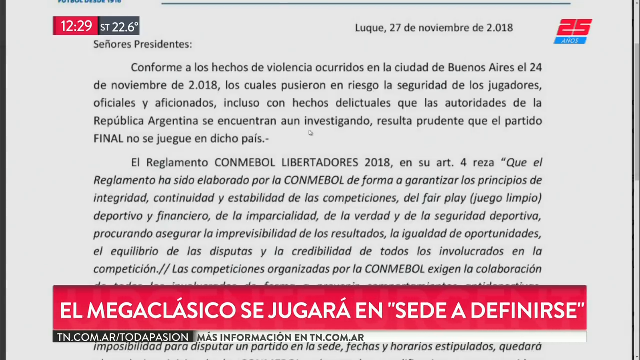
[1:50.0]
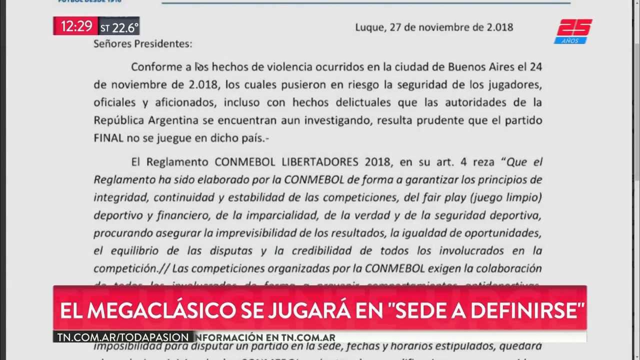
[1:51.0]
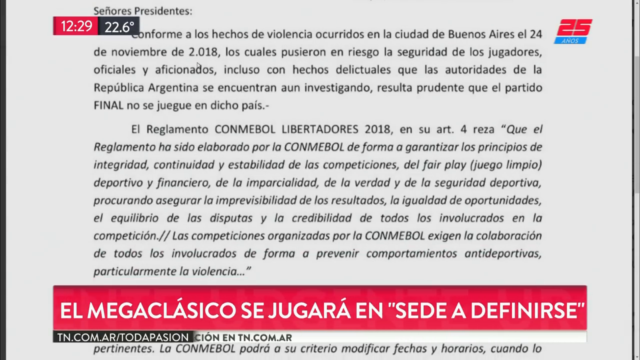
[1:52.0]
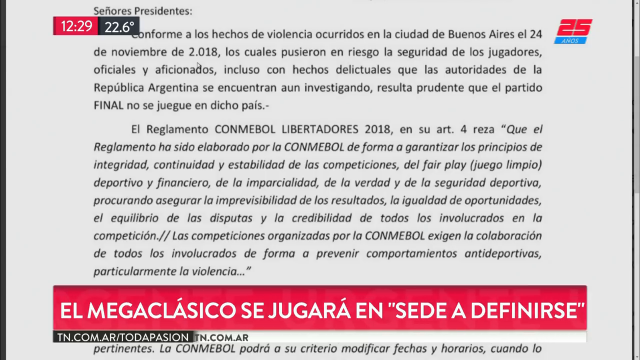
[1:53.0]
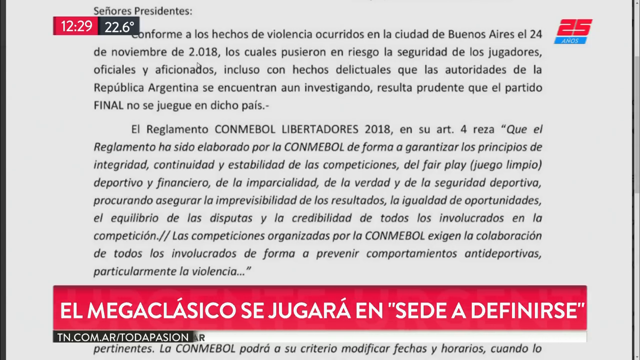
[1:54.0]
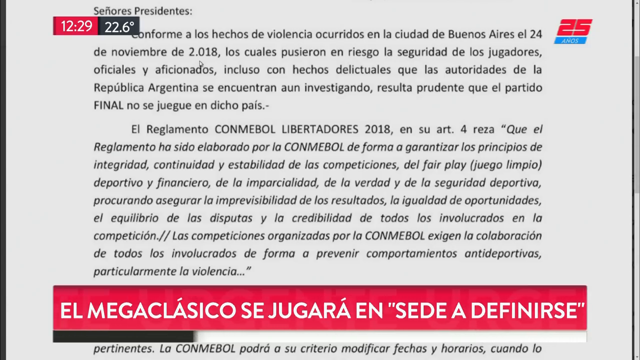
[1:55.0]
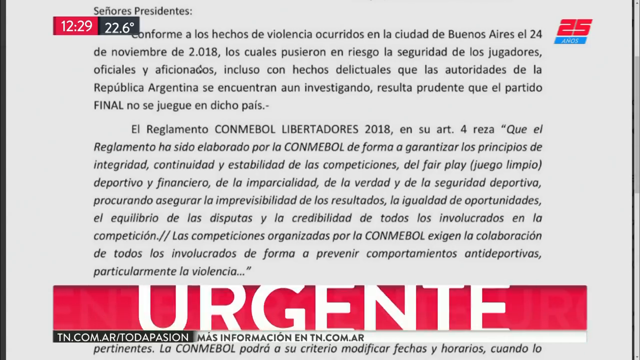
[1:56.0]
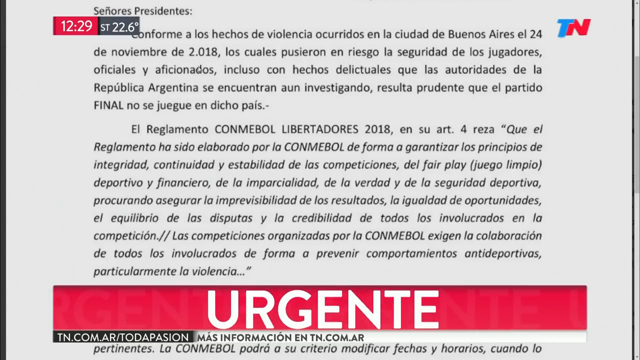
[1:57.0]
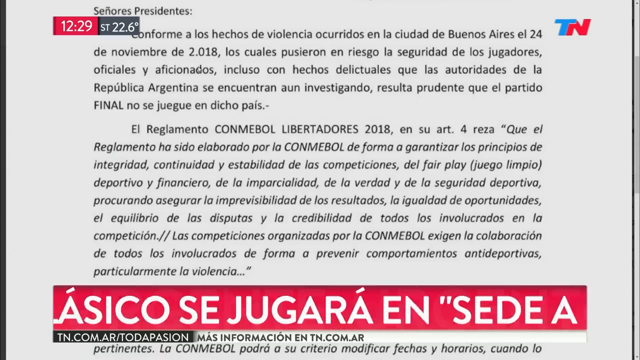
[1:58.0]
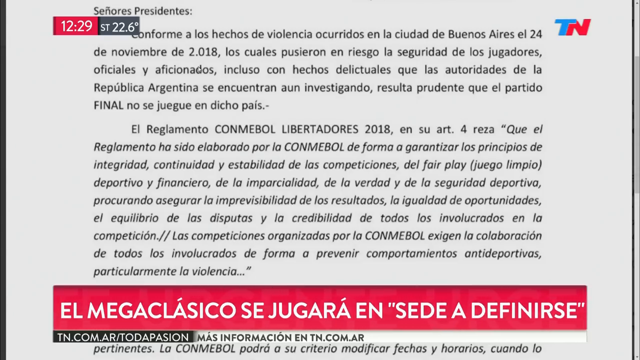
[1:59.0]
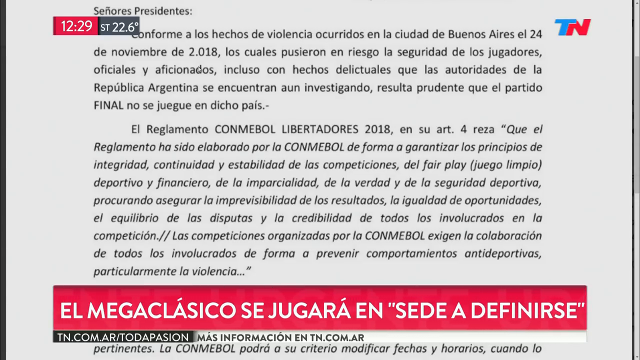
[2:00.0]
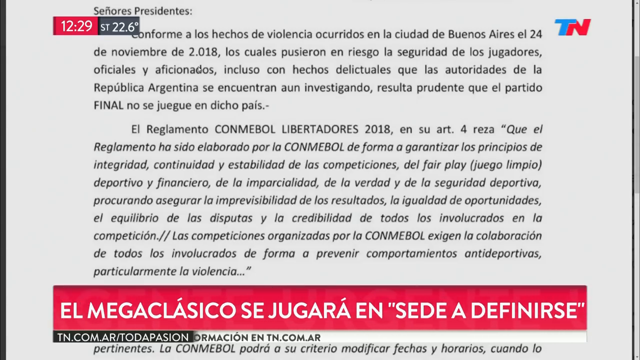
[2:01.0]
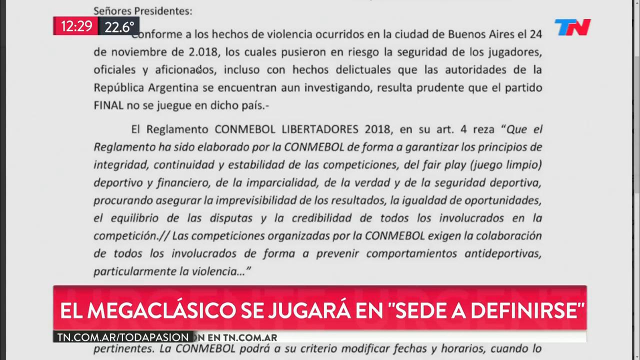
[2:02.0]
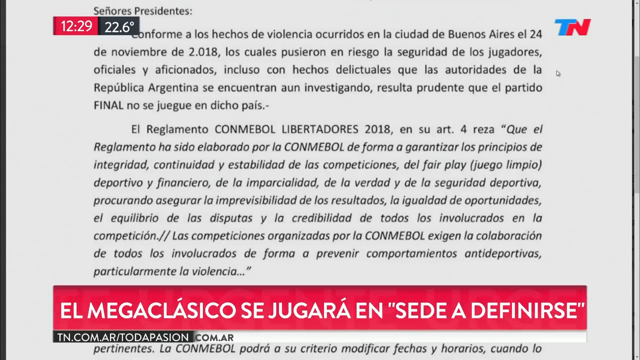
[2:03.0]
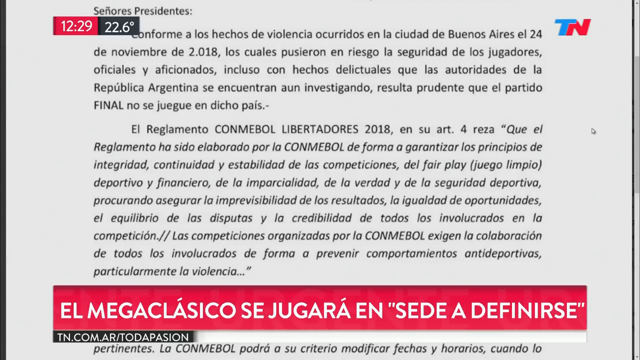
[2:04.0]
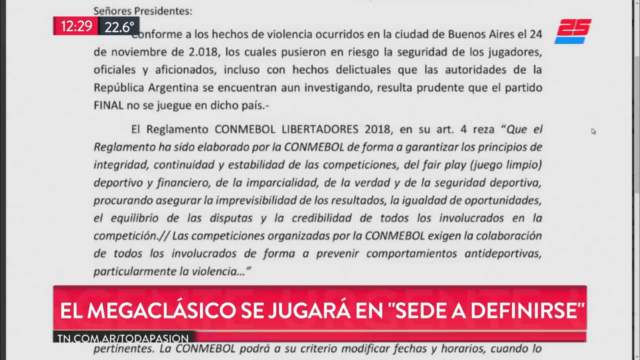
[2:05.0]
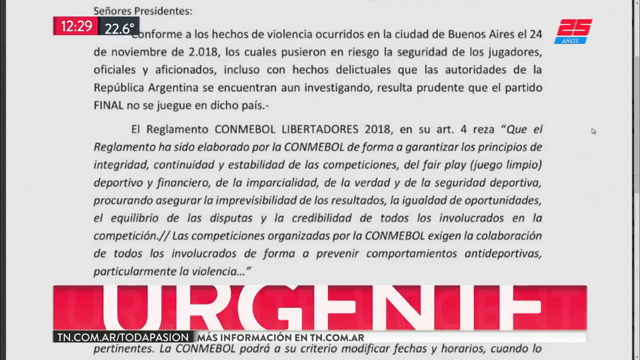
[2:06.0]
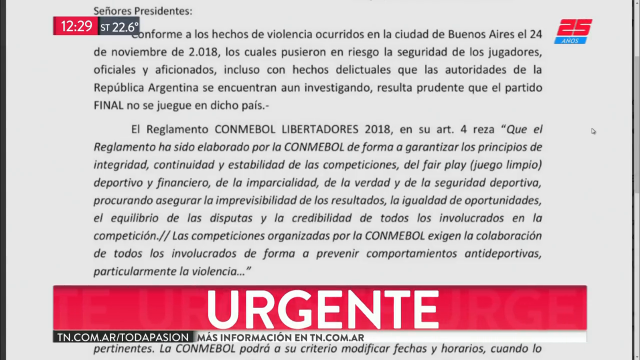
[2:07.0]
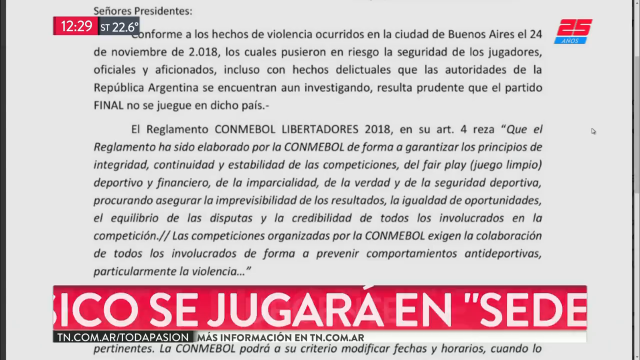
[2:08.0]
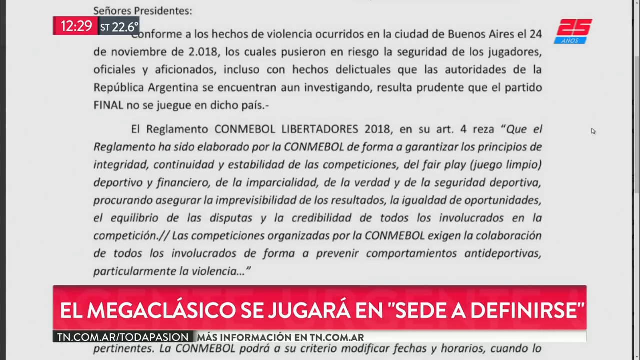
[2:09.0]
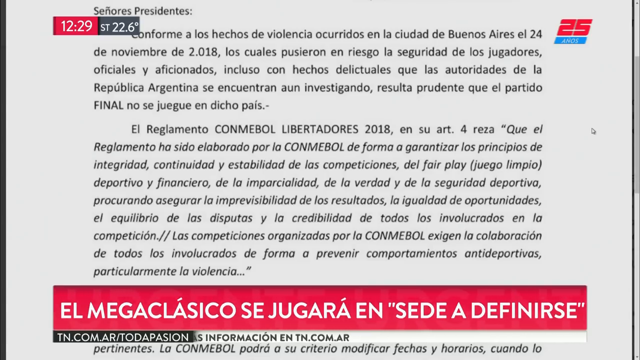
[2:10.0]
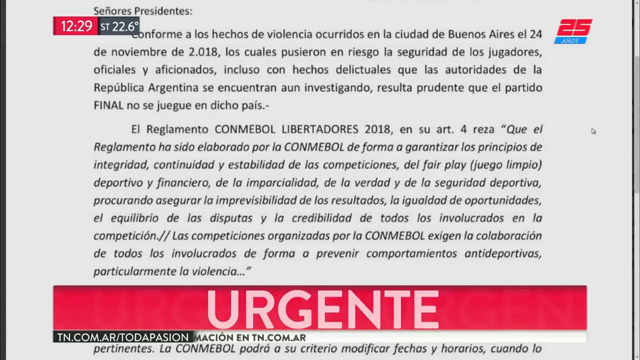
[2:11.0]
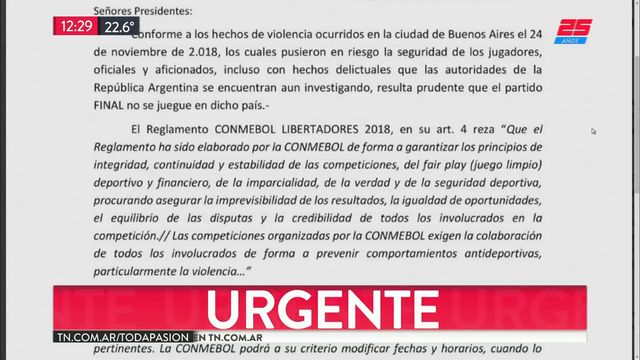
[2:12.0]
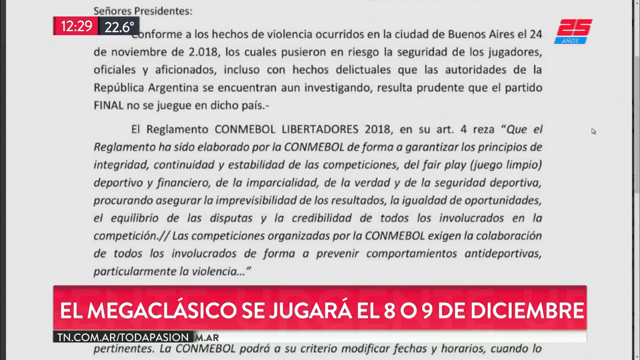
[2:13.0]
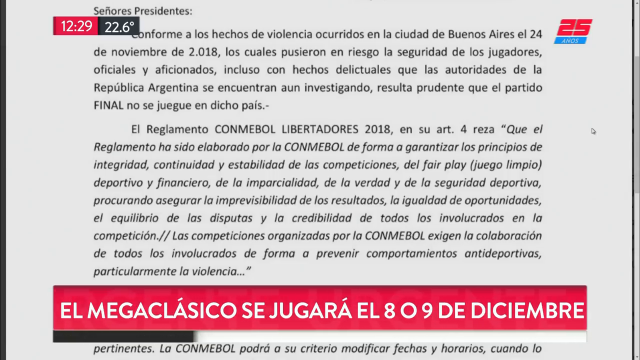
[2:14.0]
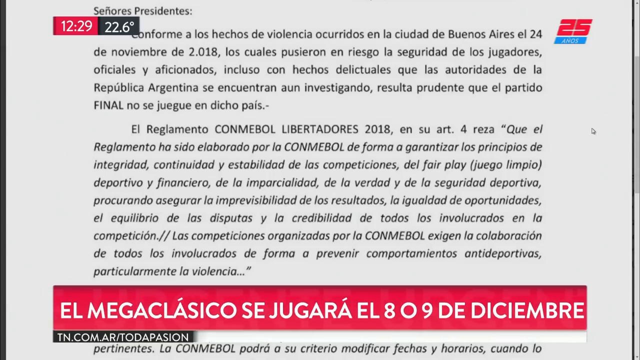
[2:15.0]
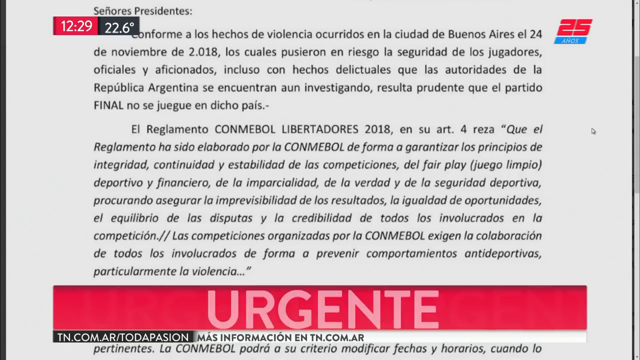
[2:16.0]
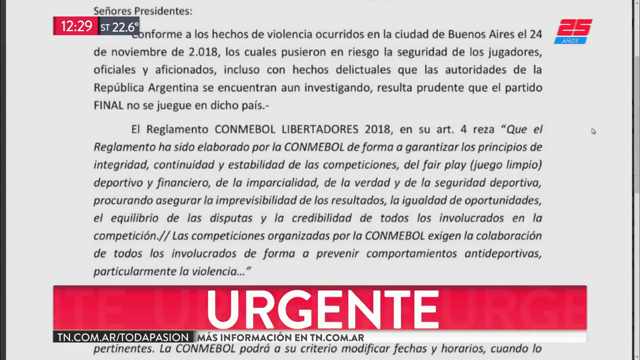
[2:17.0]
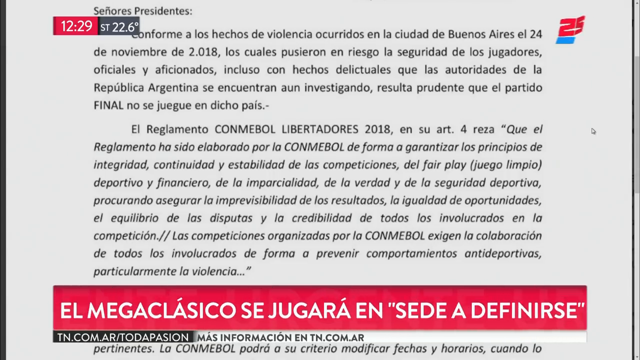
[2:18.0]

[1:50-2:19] A news image shows the time as "12.29", with black text in a foreign language on a white background and a red box at the bottom. On the main screen, a white mouse cursor moves back and forth over the first visible paragraph. The page scrolls down a little and the mouse moves slightly, still staying over the same word. Meanwhile the text in the box below and the banners have changed. The cursor then moves all the way to the right of the screen into the open space and stays in that spot as the banners keep updating at the bottom of the screen.